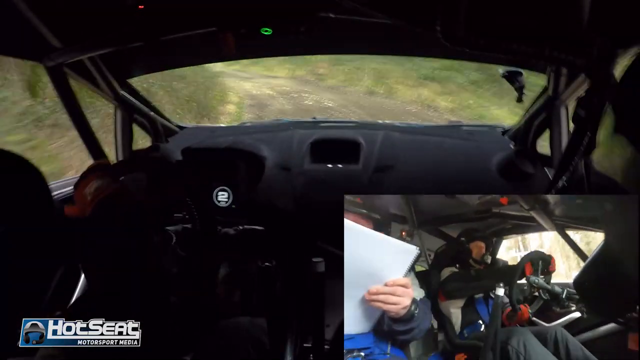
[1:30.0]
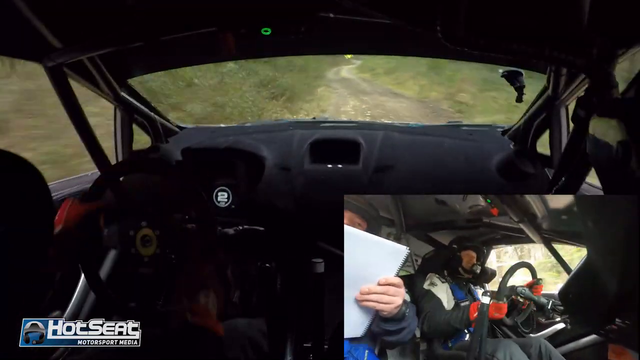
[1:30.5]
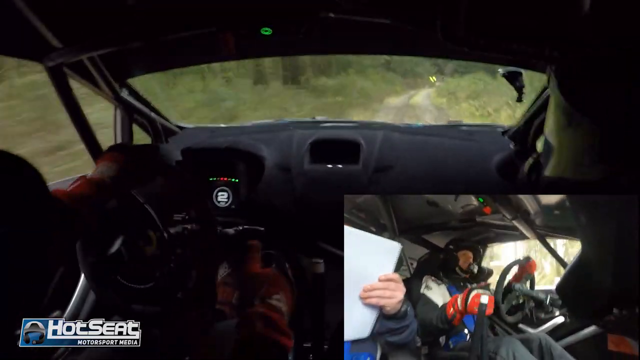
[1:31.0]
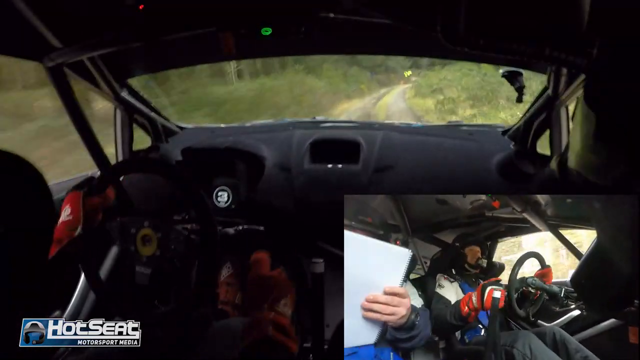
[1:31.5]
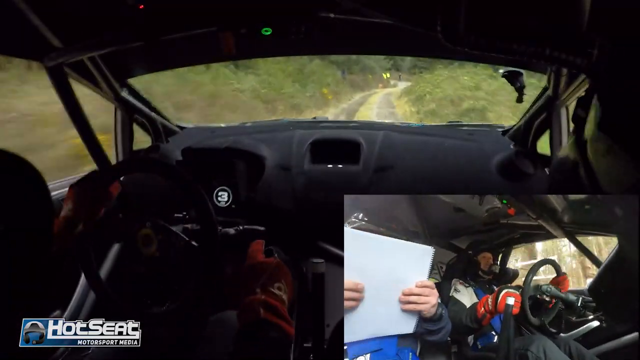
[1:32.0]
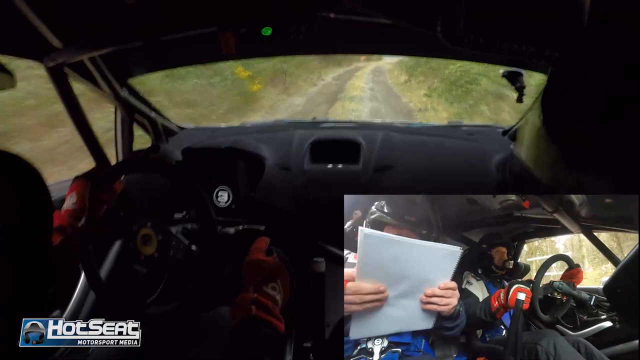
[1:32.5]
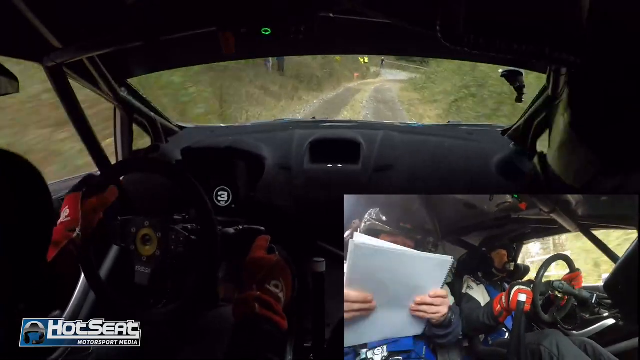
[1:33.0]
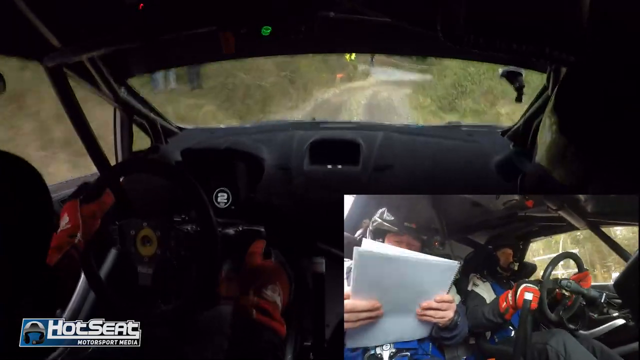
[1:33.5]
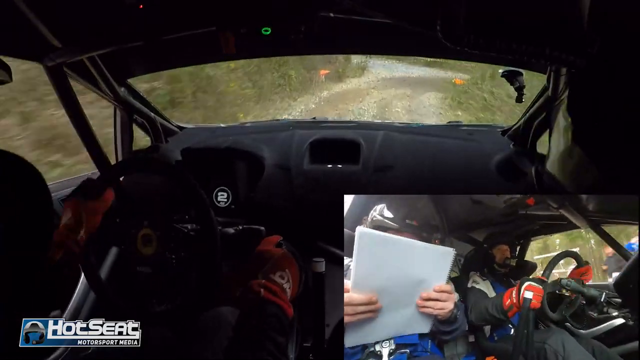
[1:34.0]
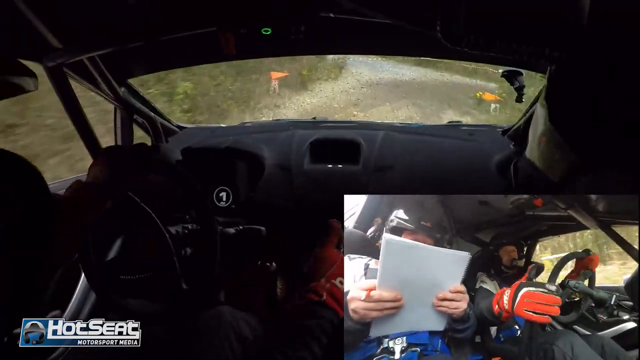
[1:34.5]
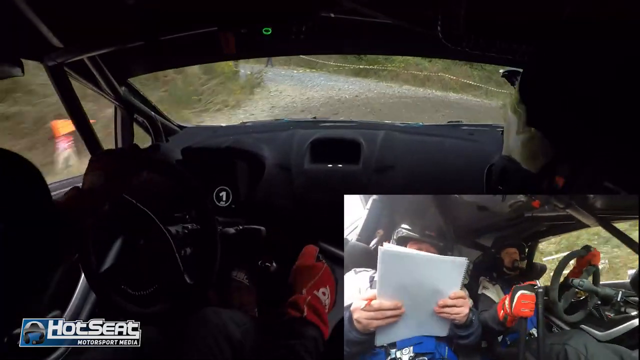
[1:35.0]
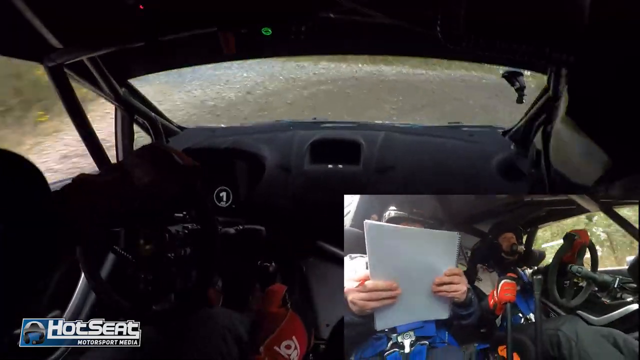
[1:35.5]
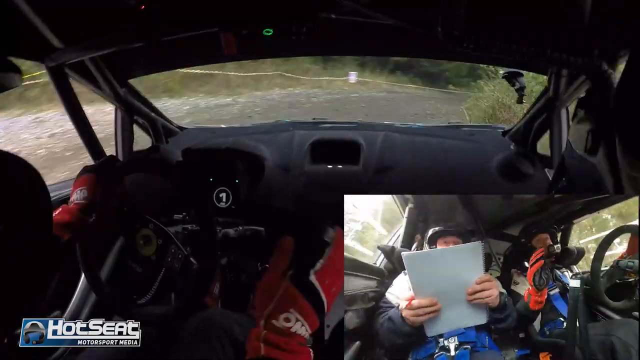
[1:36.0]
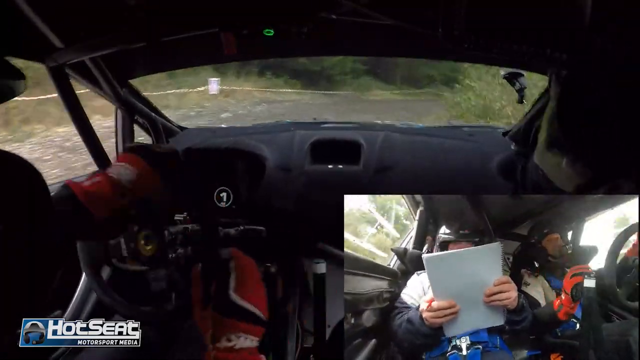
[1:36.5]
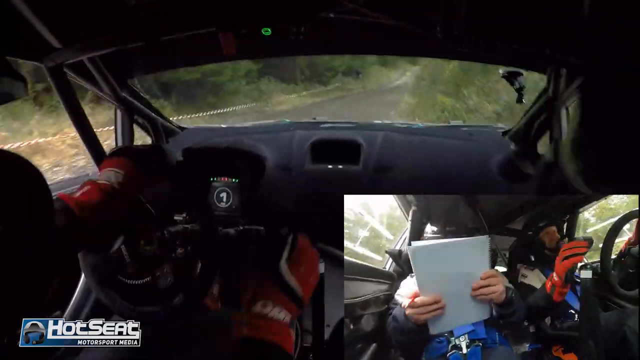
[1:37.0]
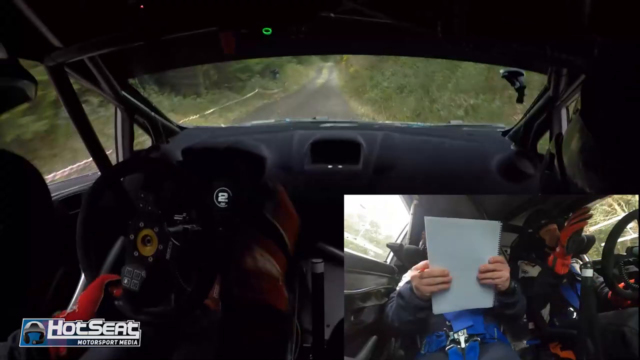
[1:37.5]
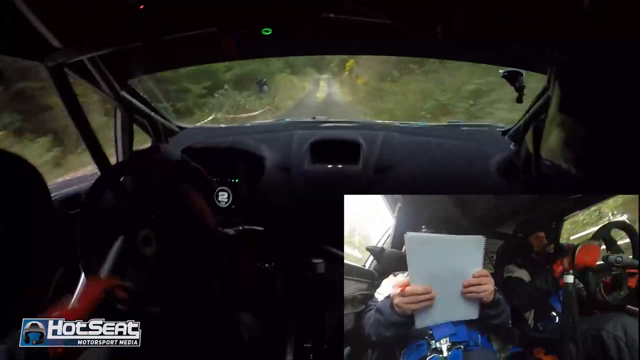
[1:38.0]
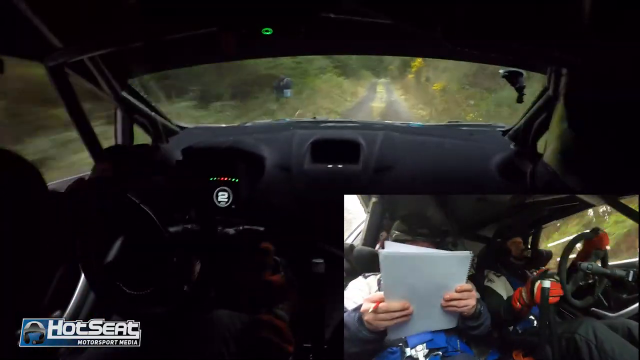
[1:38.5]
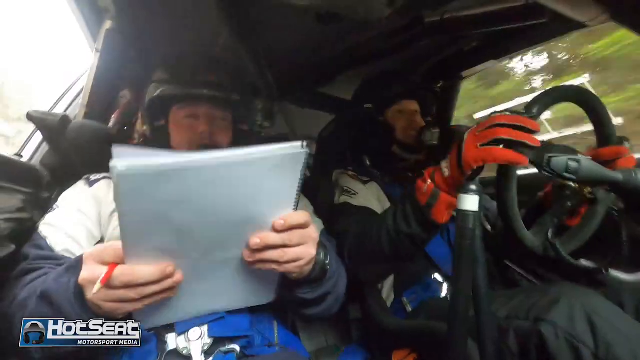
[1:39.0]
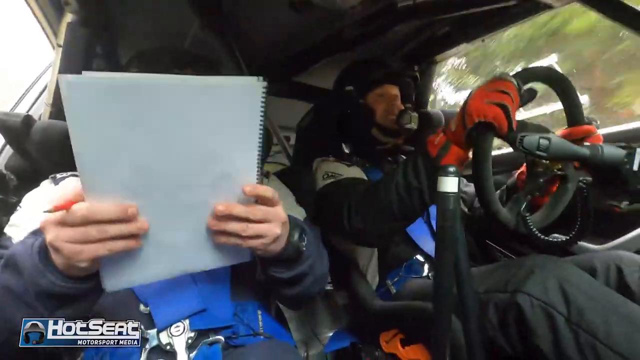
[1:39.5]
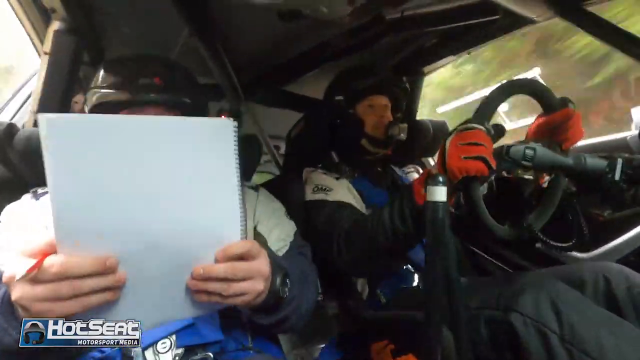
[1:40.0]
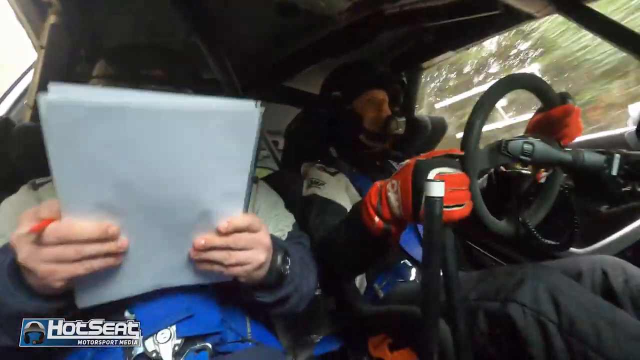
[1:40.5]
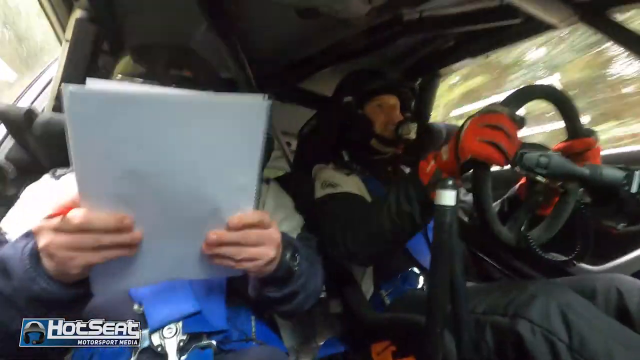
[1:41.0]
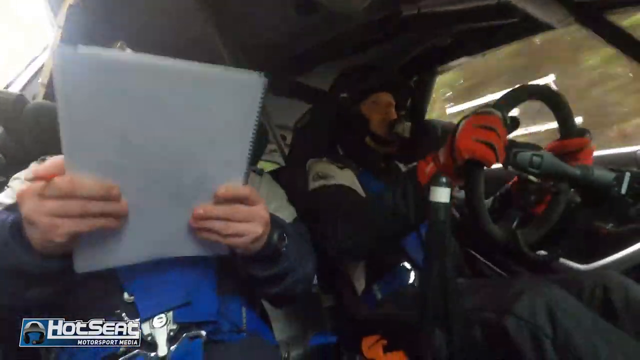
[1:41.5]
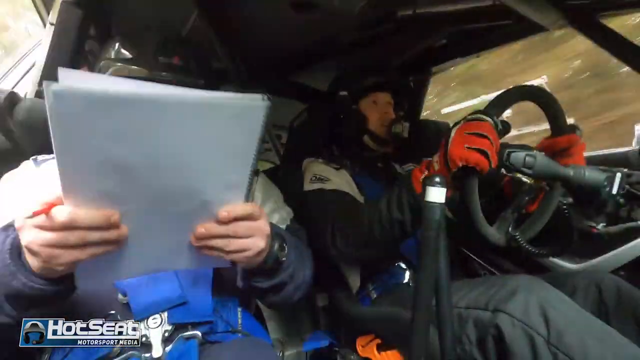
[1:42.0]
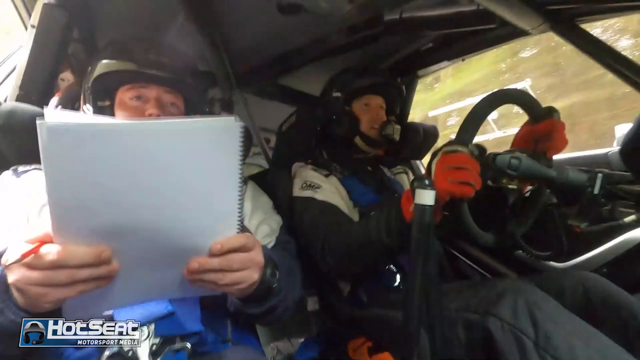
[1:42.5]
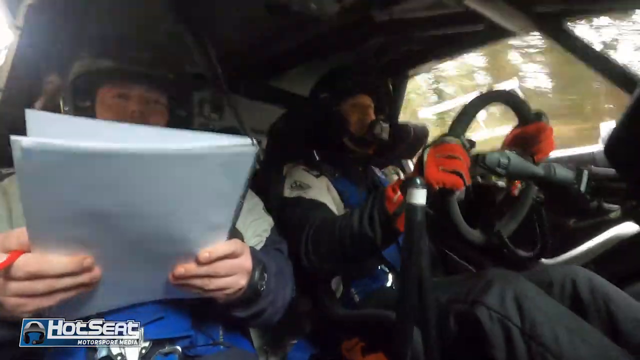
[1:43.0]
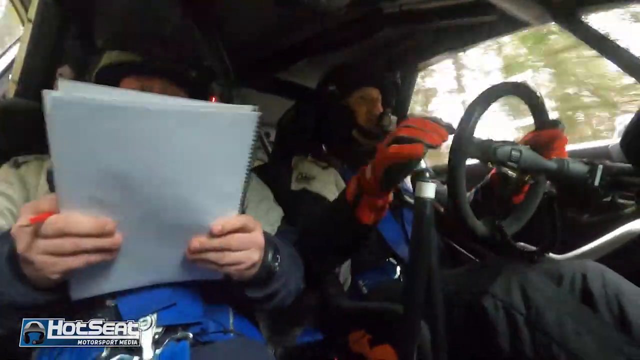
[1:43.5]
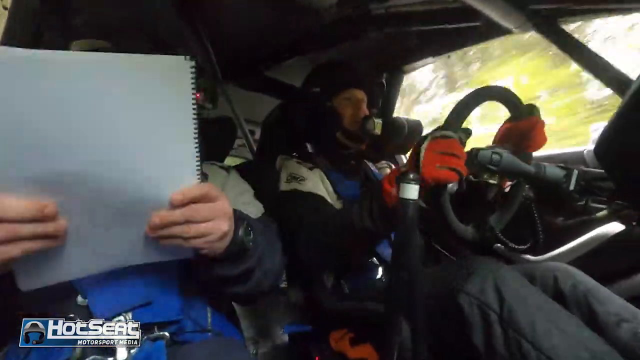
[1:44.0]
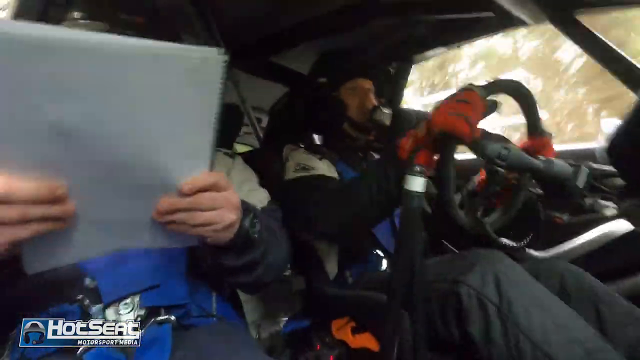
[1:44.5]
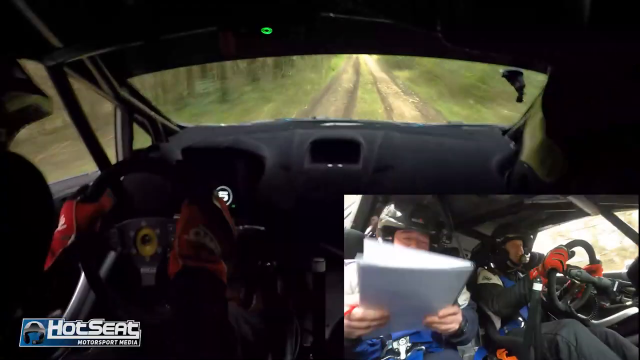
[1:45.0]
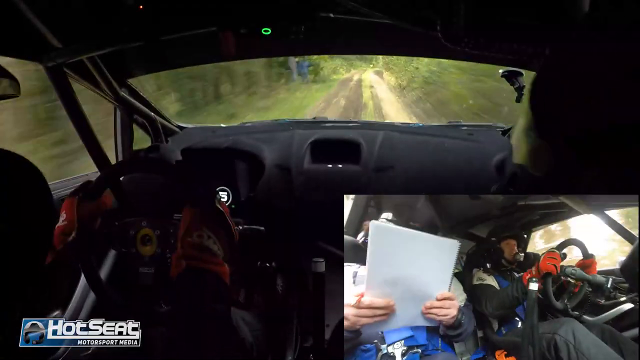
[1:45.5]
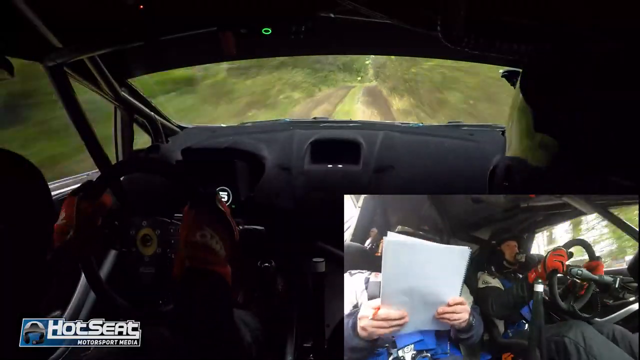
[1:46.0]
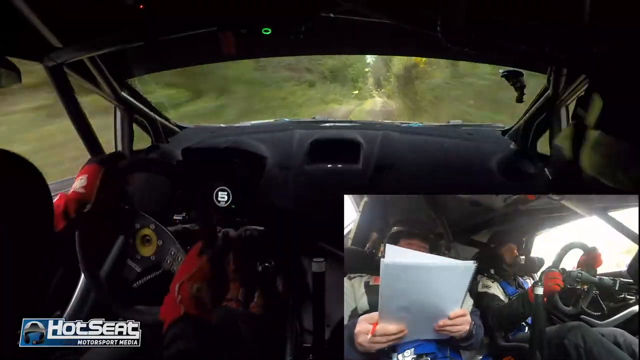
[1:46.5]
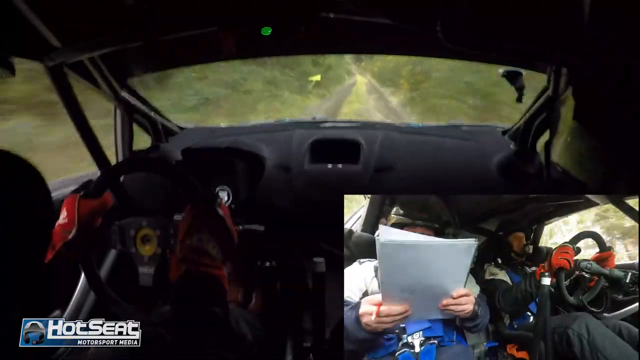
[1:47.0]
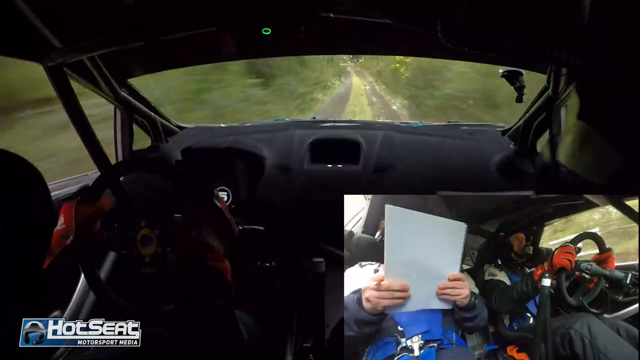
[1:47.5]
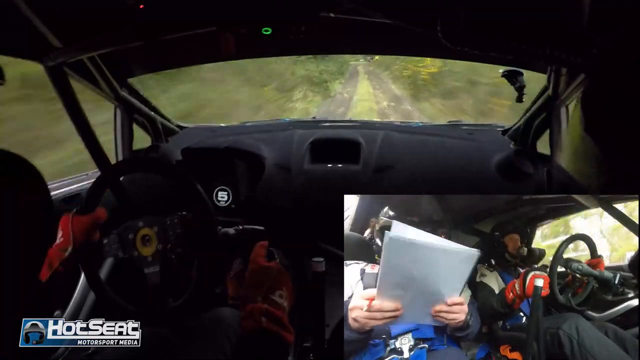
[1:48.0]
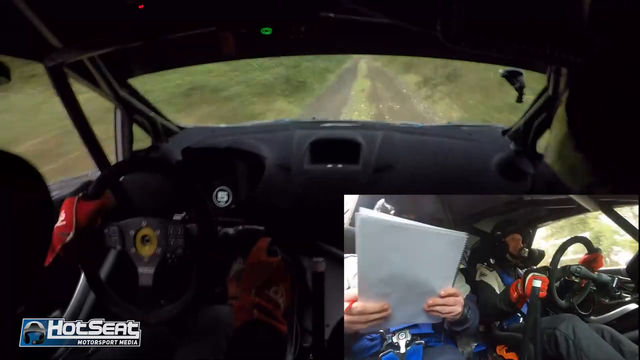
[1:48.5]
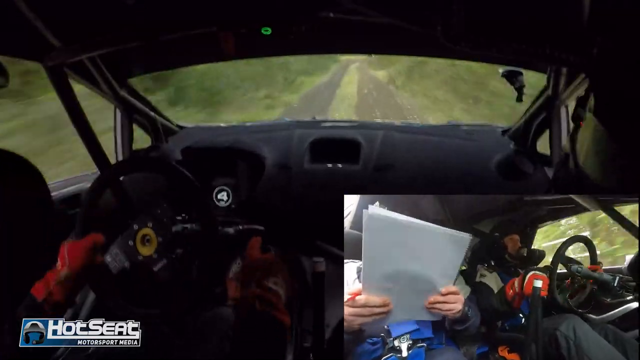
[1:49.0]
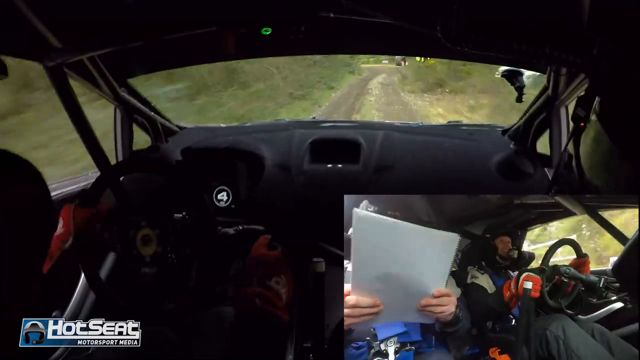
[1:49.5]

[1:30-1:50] The men drive very fast, and some objects pop up at the side, but they are hard to make out because the car is bouncing around. The camera view keeps switching between the view of them driving and the view of them inside the car. The passenger still holds the paper, and from no angle can its contents be seen; his face is barely visible. The driver wears headgear that goes up over his mouth. Both men are white males, probably in their 40s, but the image is somewhat blurry and low quality. At certain points green and red lights come on on the dashboard. A logo in the bottom reads "Hot Speed Motorsports media", and a digital number changes from four to three to two.